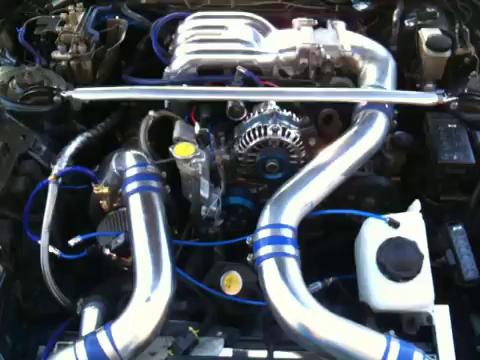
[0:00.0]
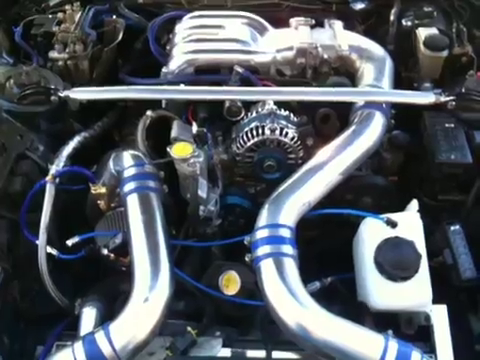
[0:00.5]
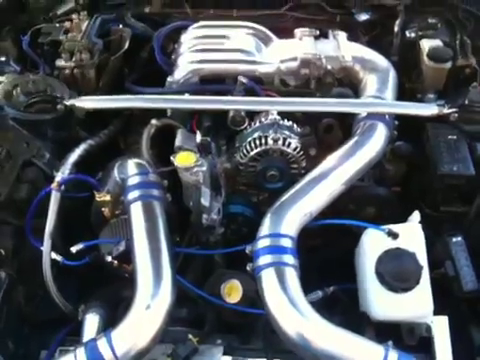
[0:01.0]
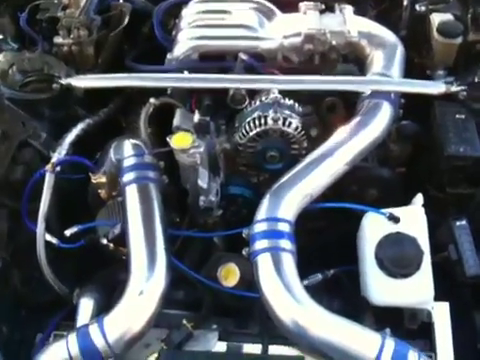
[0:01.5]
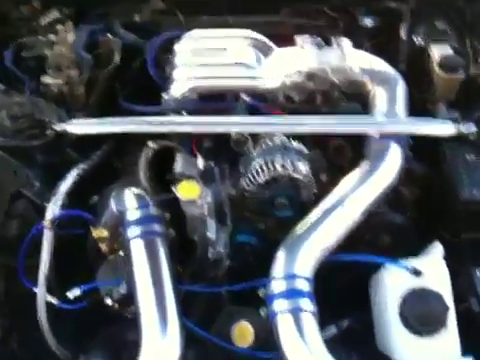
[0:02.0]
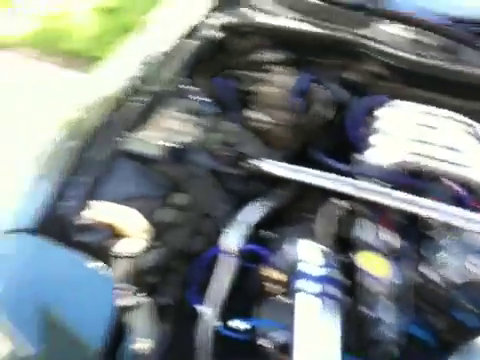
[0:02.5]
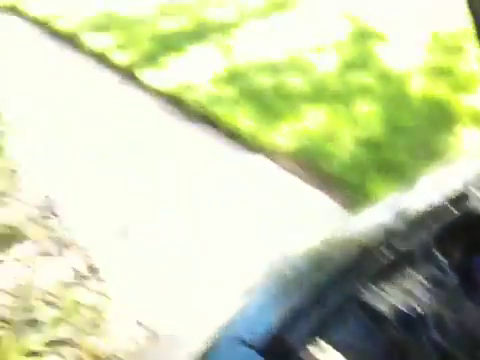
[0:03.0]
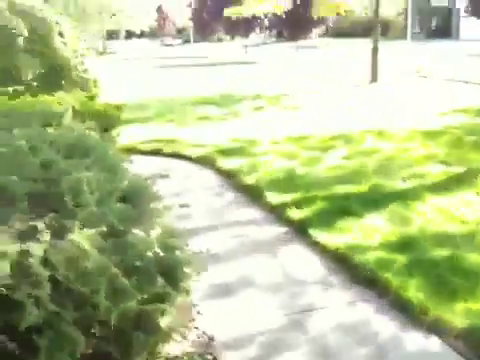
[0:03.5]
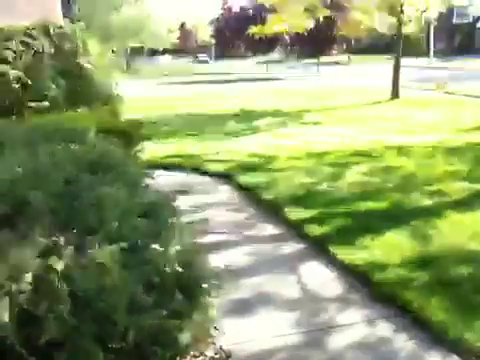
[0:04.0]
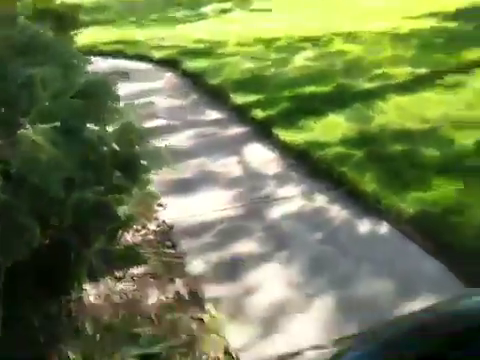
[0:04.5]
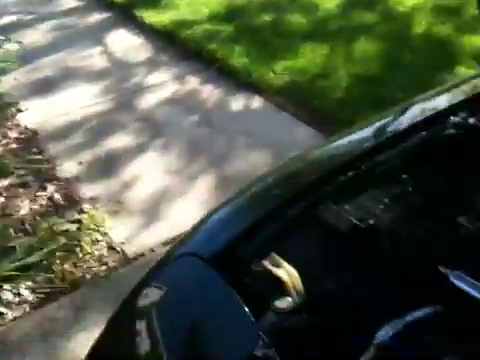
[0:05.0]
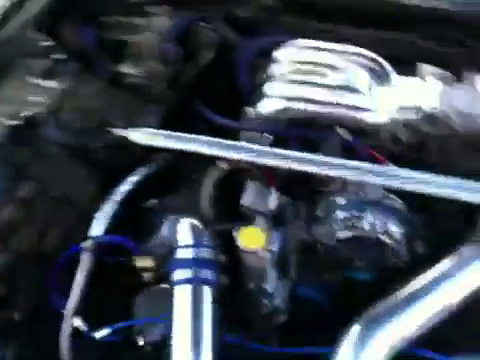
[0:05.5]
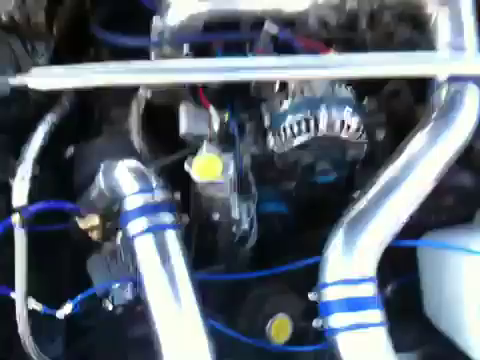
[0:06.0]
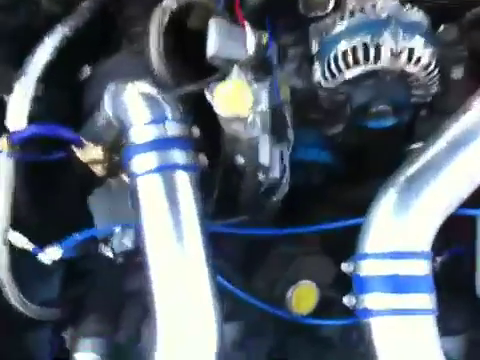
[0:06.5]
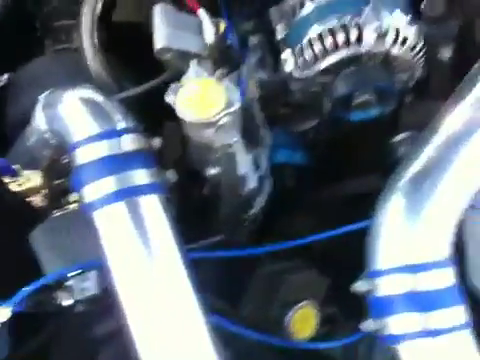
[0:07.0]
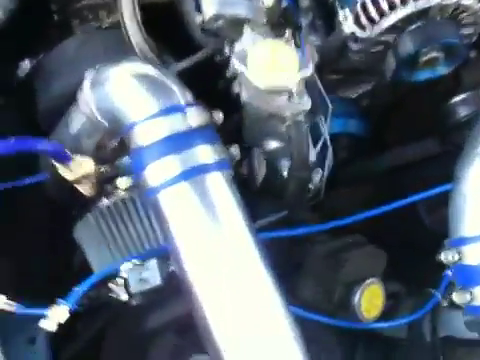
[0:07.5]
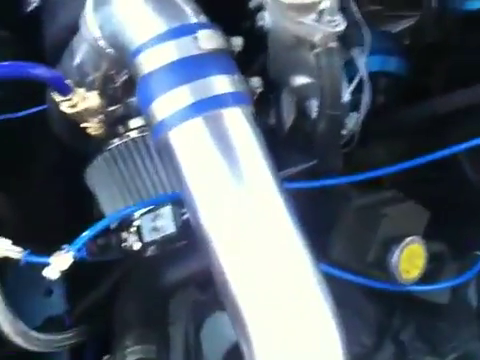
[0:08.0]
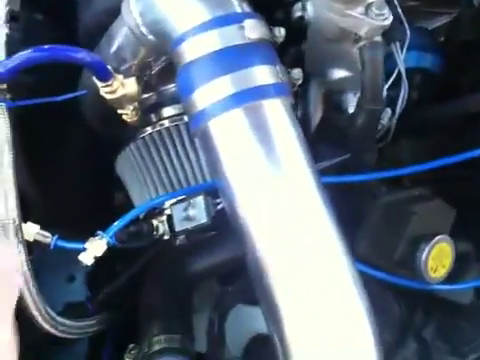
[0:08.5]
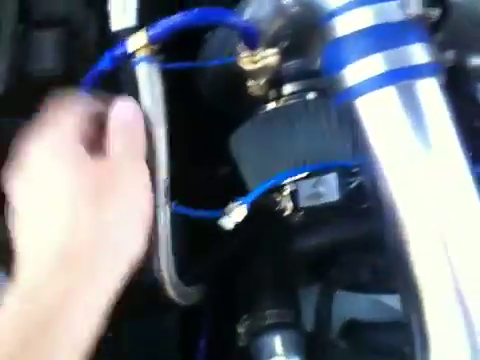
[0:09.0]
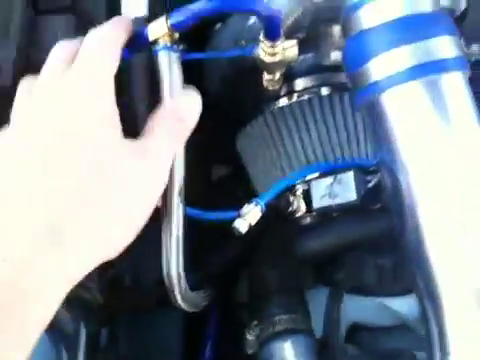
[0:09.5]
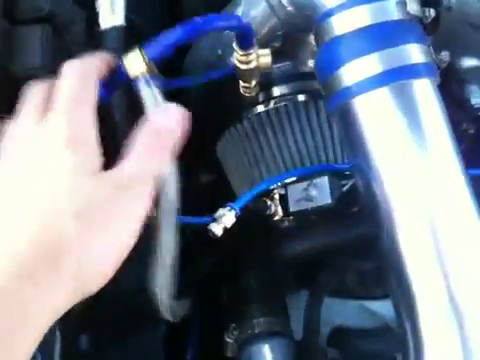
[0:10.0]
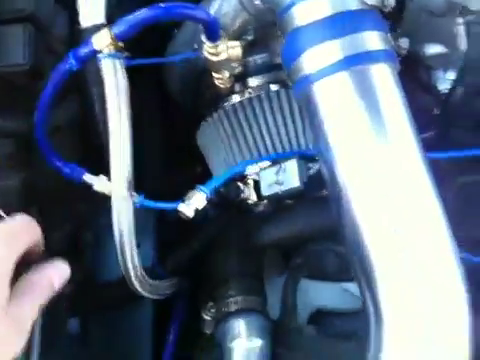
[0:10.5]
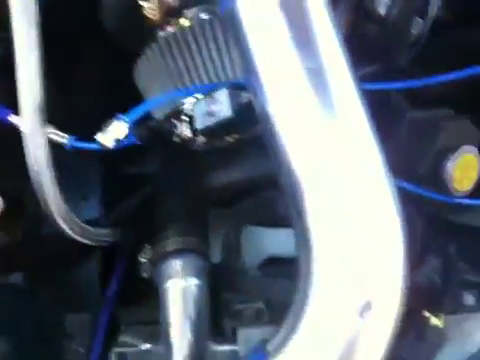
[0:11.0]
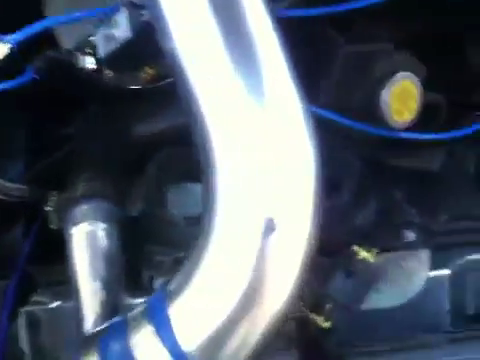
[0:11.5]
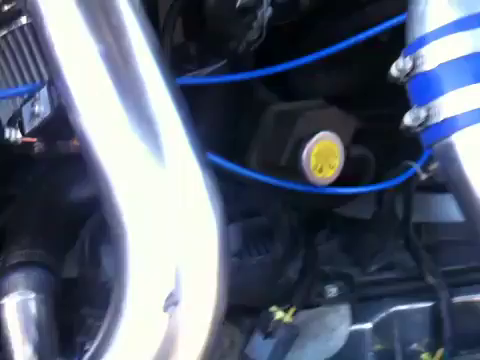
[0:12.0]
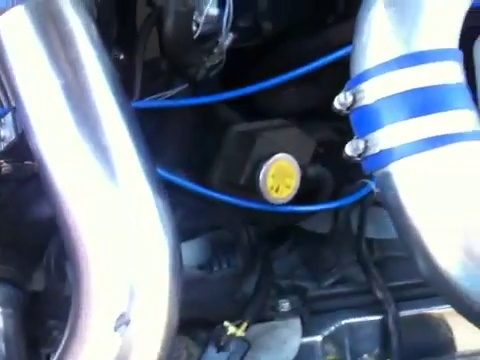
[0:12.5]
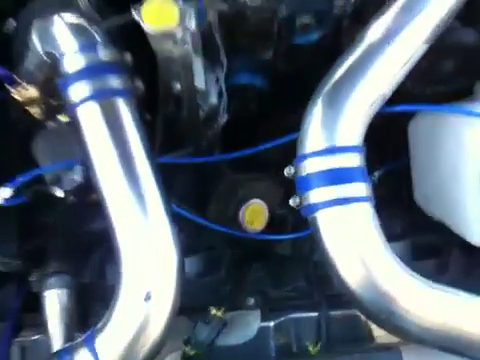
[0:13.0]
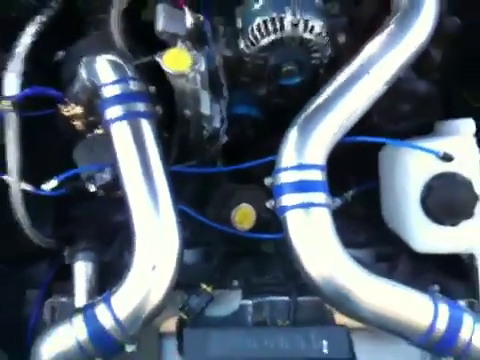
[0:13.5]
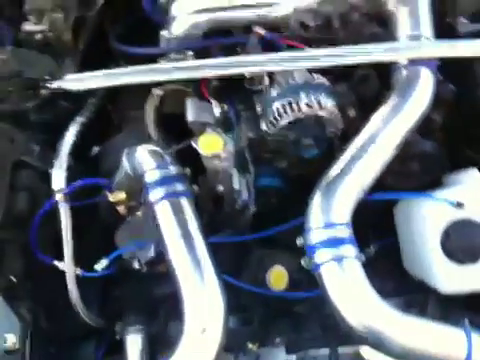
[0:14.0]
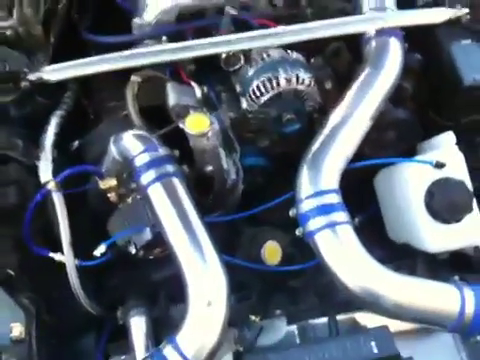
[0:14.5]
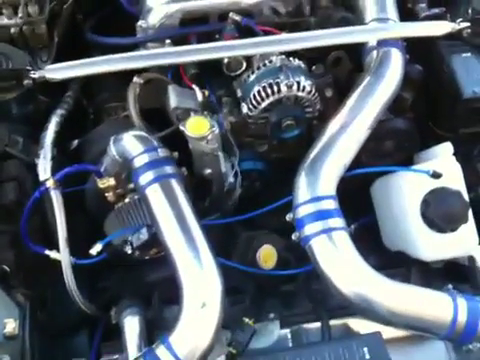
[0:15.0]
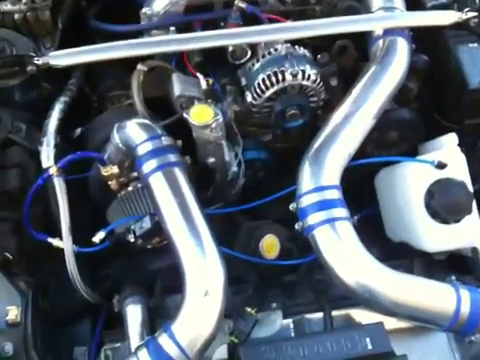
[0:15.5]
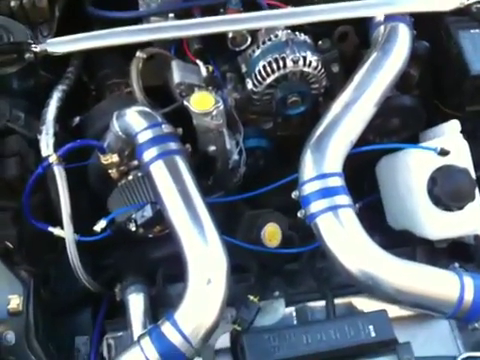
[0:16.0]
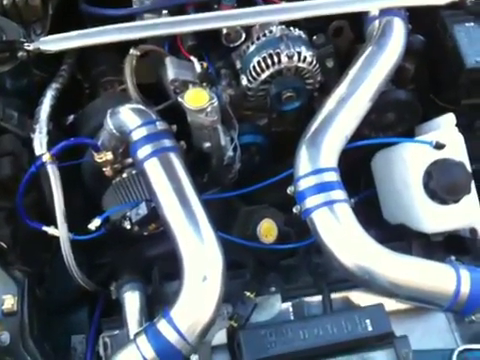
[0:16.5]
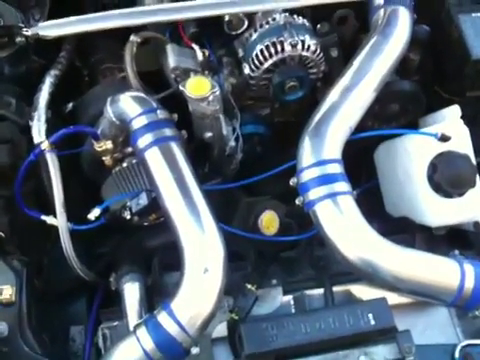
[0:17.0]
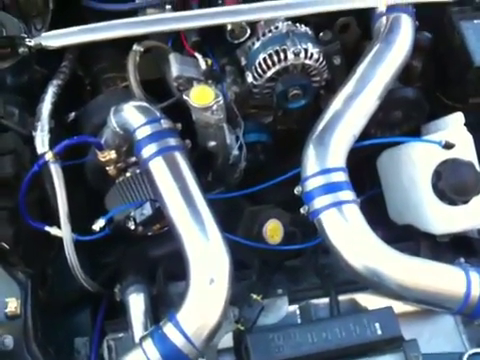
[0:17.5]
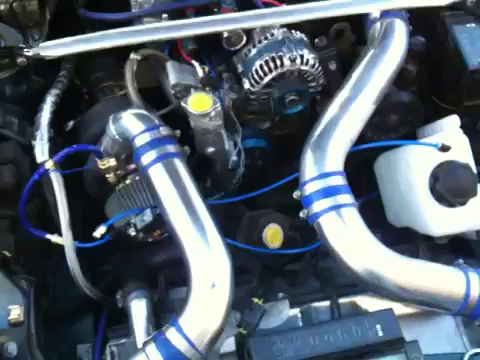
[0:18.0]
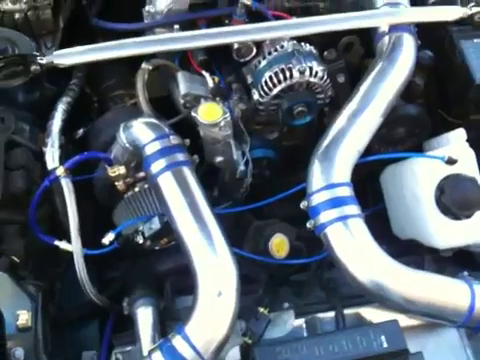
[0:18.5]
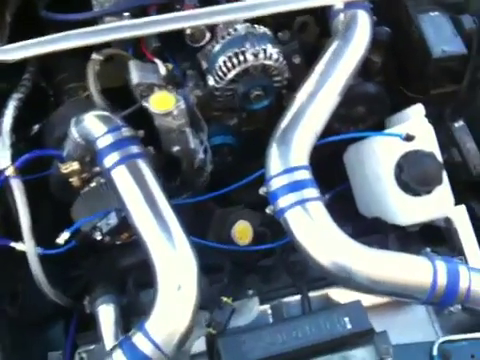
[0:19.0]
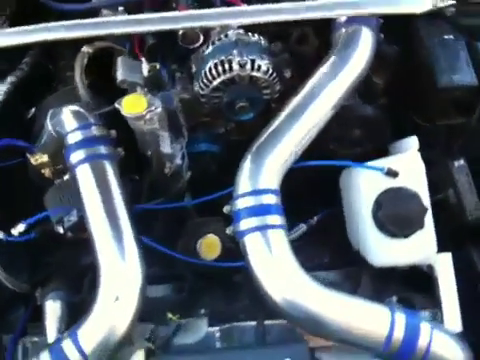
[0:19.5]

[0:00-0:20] A camera records the inside of a vehicle's open hood, showing the engine and various parts built into the front of the vehicle. The vehicle looks to be parked in a grassy area: the camera shifts to the left, revealing a walkway and trees on the left side, and in the background a car drives along a road. The camera then moves back to the hood, which looks well maintained, clean and polished. A large blue wire runs throughout the vehicle, there are shiny, polished pipes, and stringy wire goes all around the area.